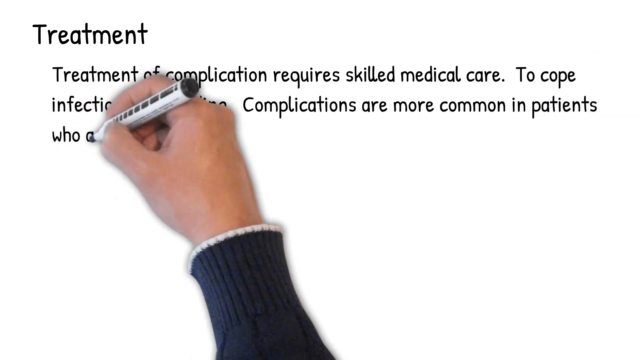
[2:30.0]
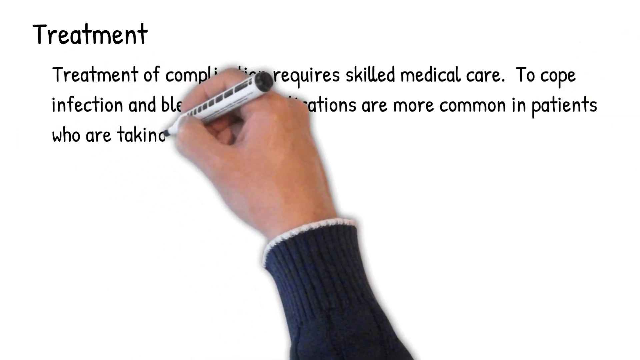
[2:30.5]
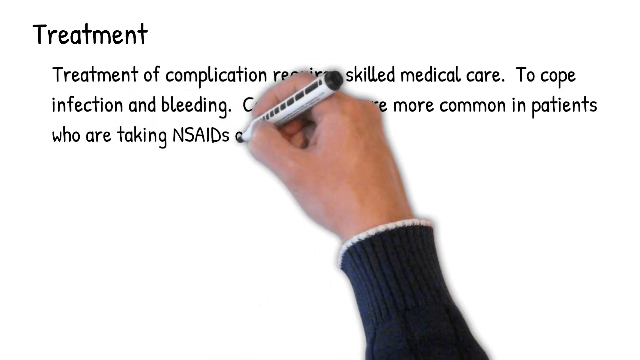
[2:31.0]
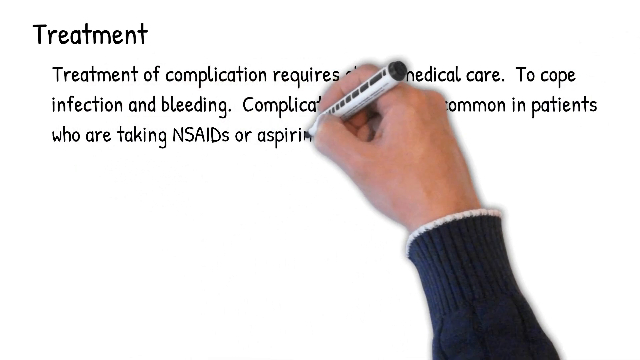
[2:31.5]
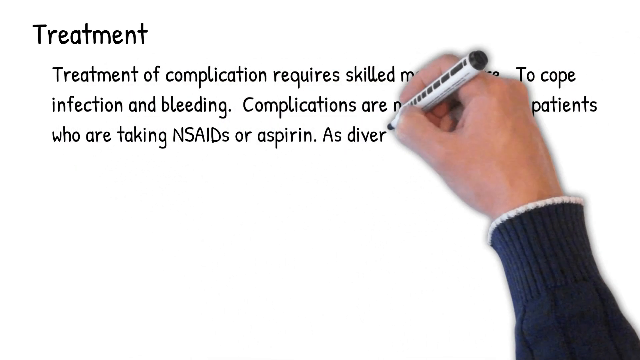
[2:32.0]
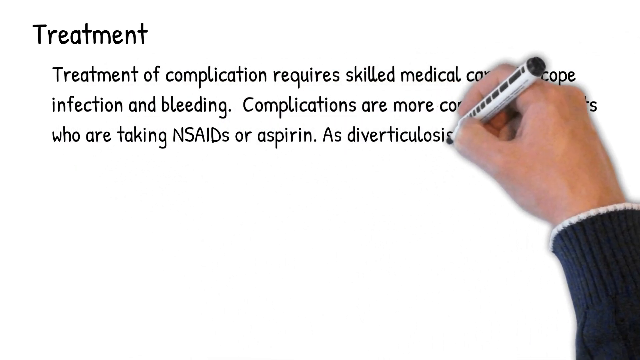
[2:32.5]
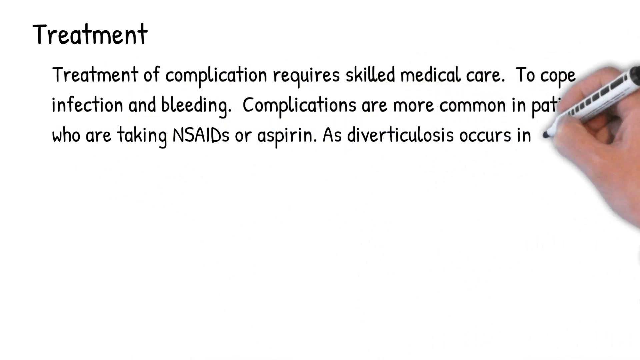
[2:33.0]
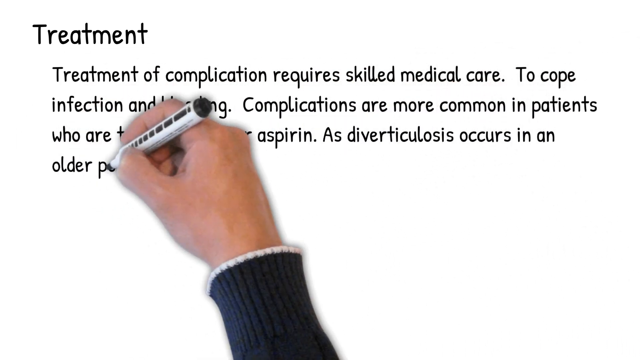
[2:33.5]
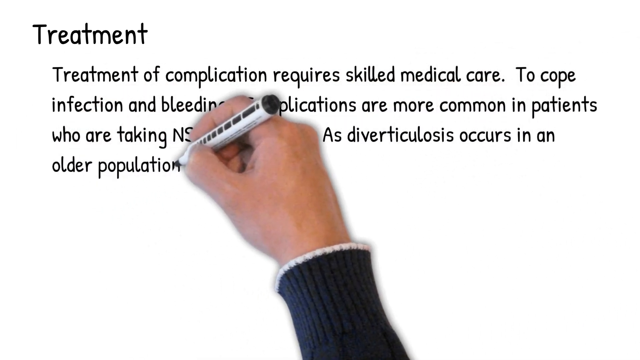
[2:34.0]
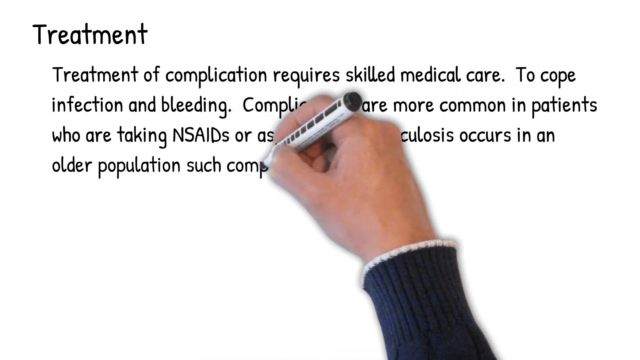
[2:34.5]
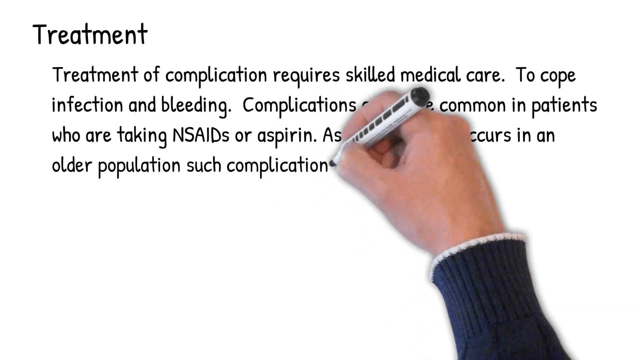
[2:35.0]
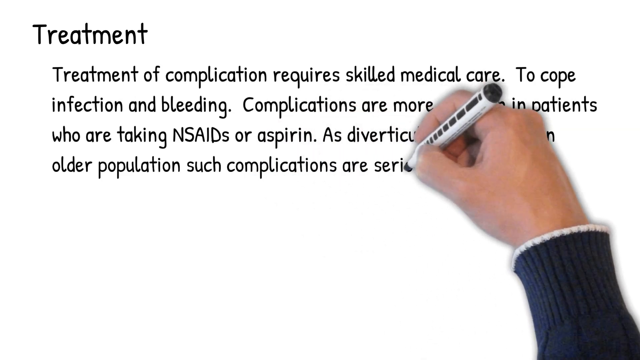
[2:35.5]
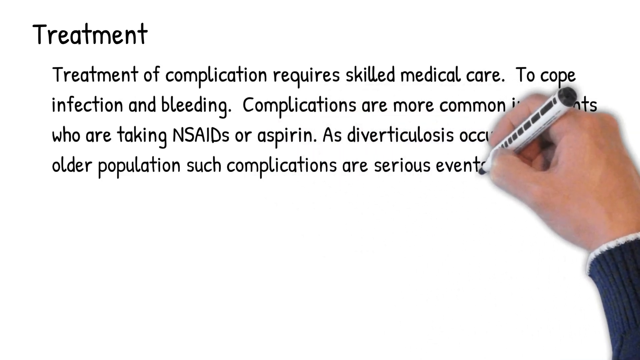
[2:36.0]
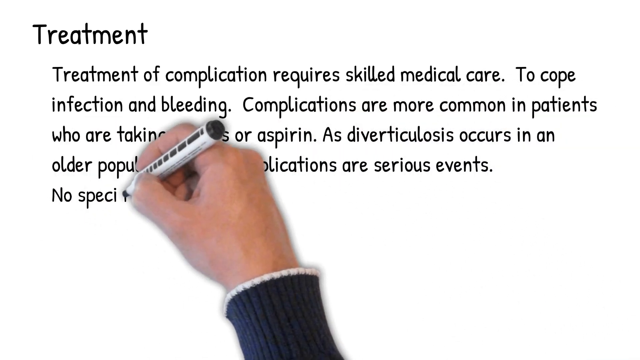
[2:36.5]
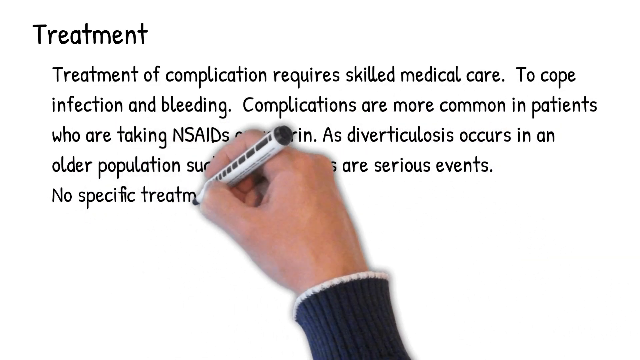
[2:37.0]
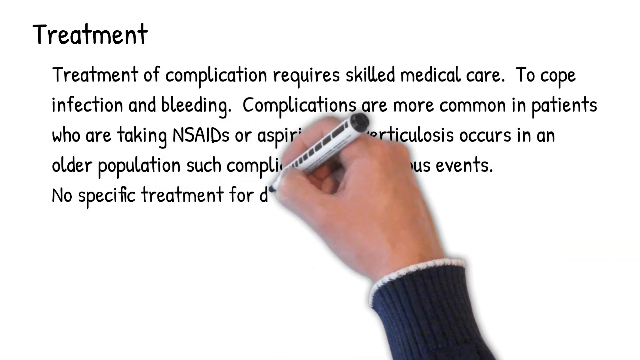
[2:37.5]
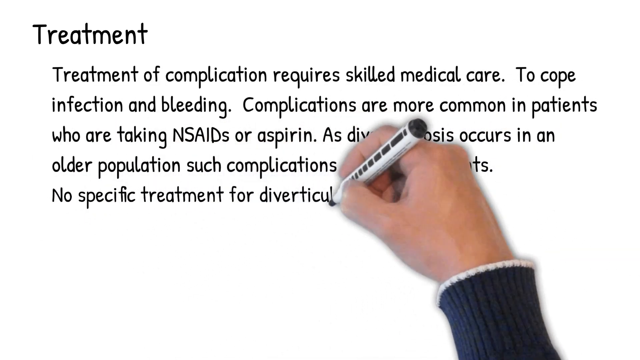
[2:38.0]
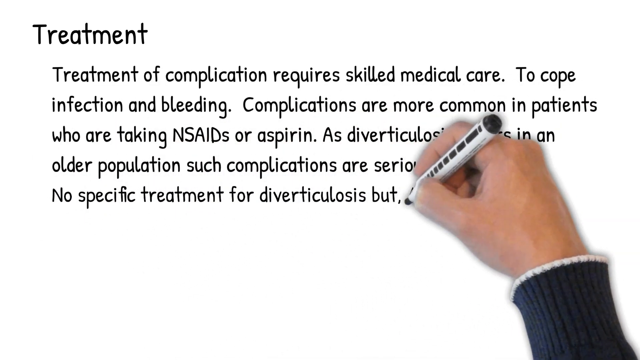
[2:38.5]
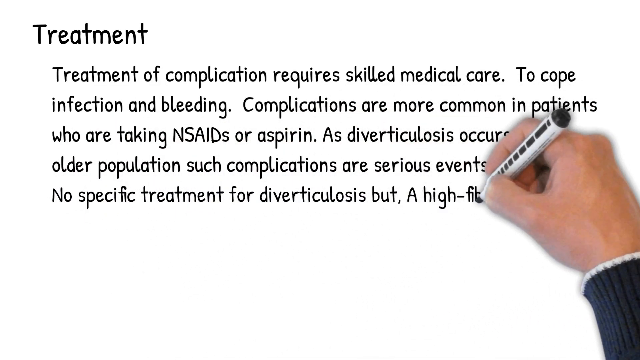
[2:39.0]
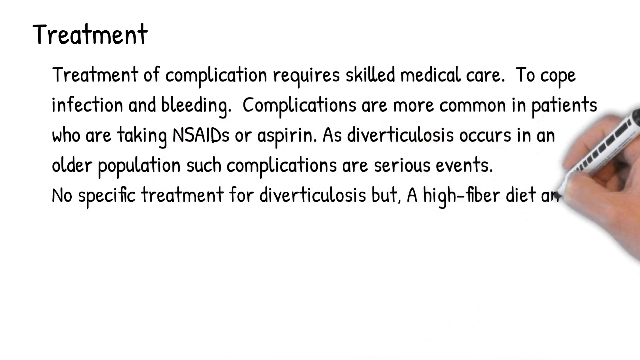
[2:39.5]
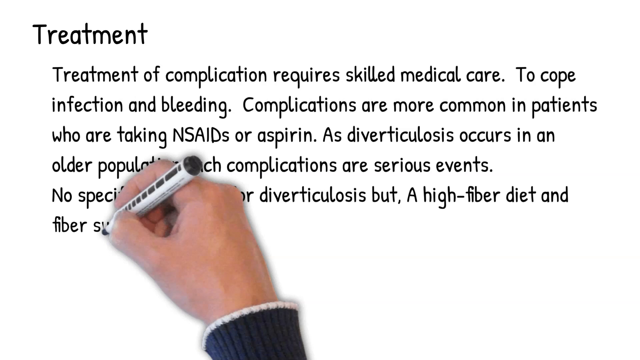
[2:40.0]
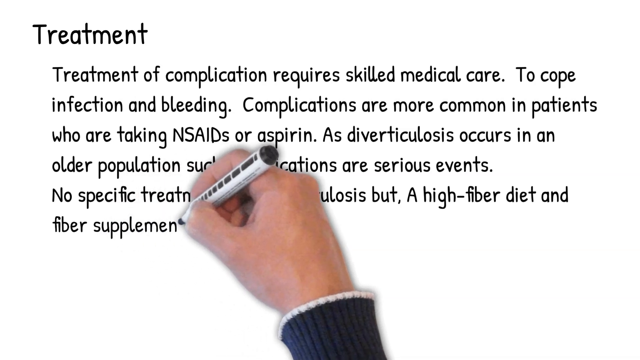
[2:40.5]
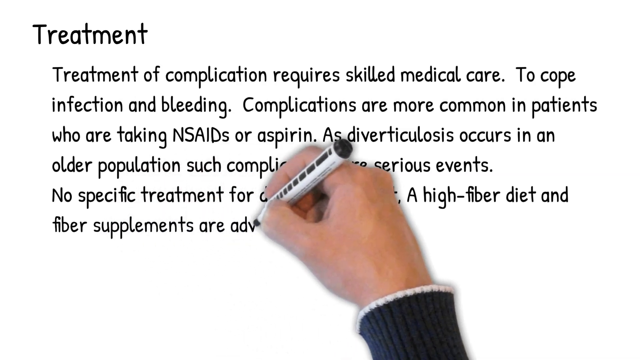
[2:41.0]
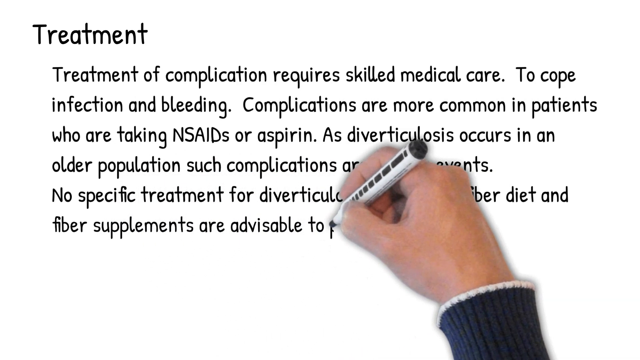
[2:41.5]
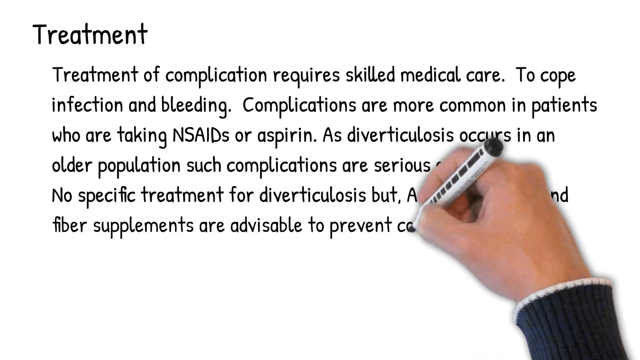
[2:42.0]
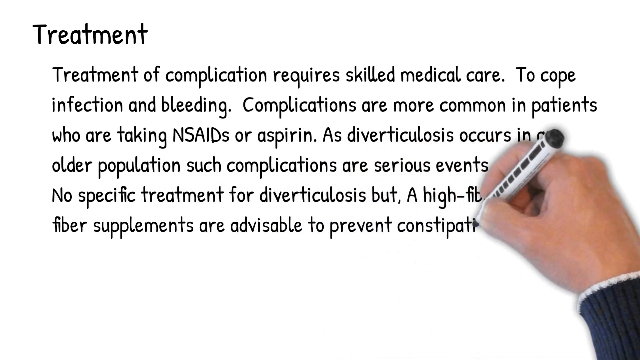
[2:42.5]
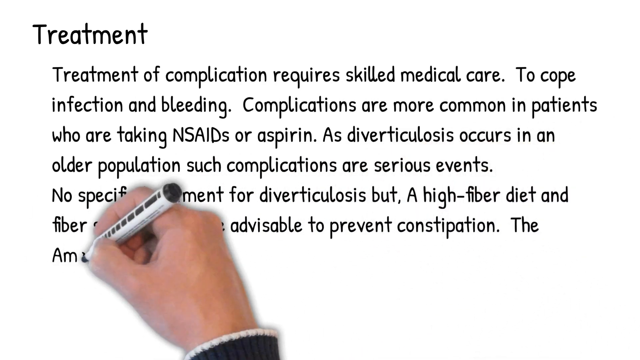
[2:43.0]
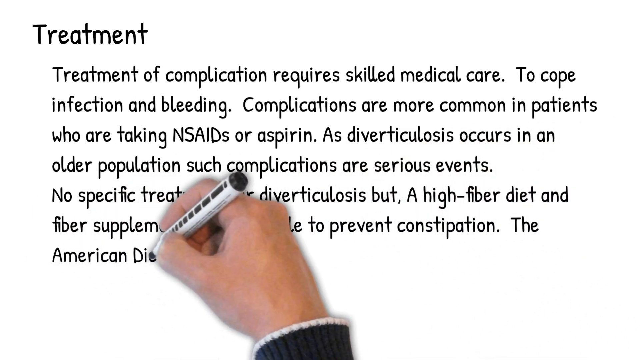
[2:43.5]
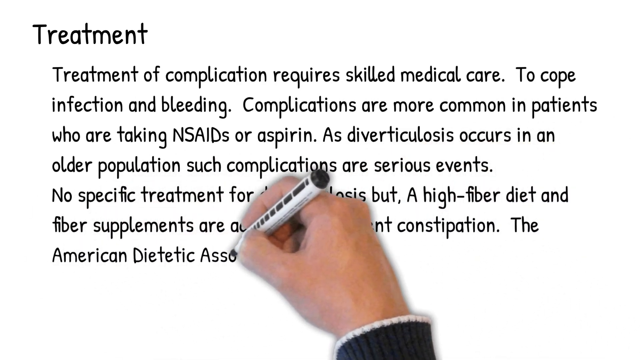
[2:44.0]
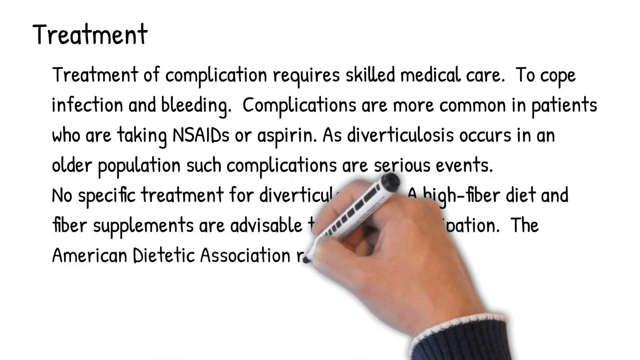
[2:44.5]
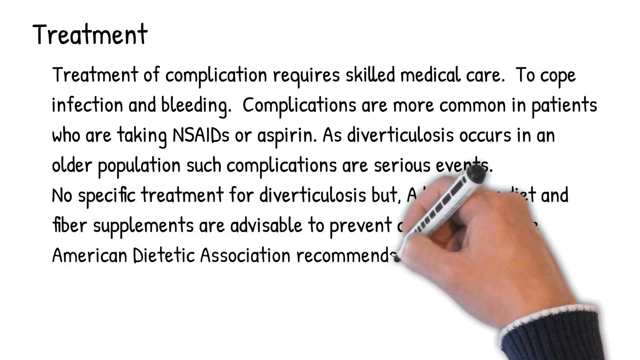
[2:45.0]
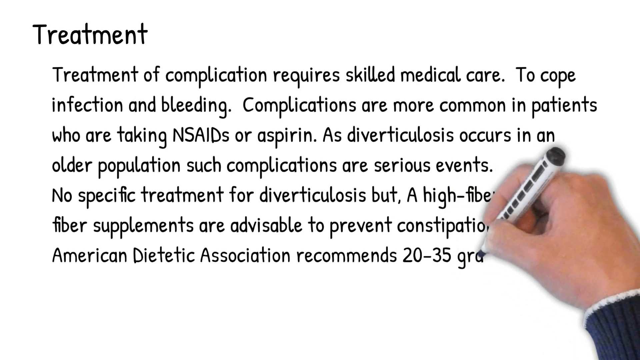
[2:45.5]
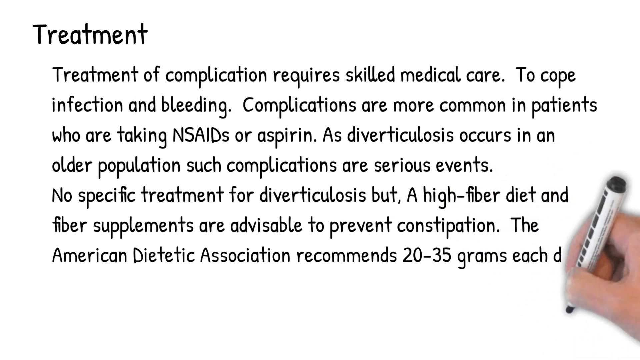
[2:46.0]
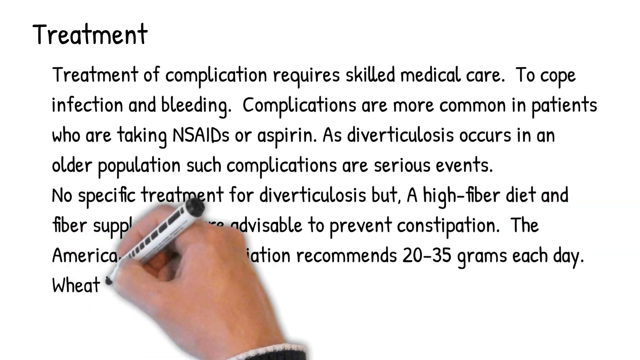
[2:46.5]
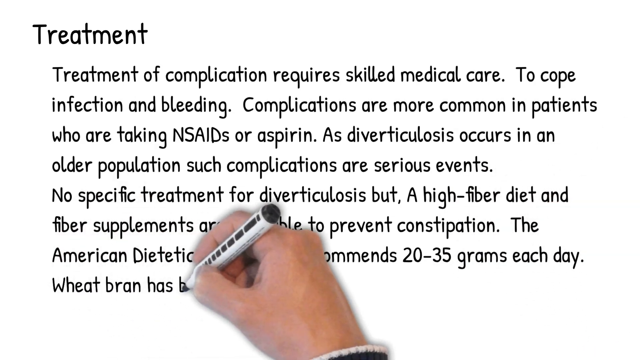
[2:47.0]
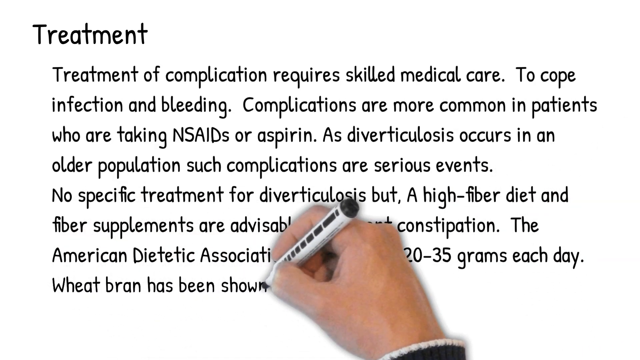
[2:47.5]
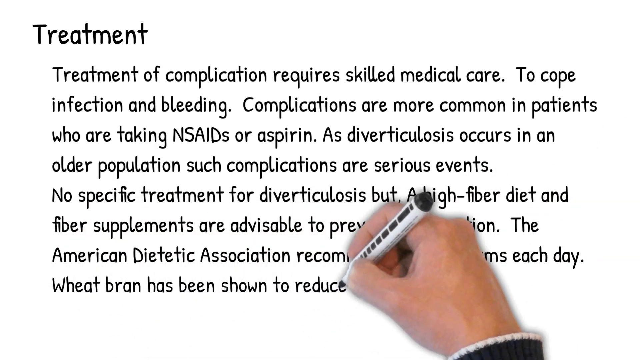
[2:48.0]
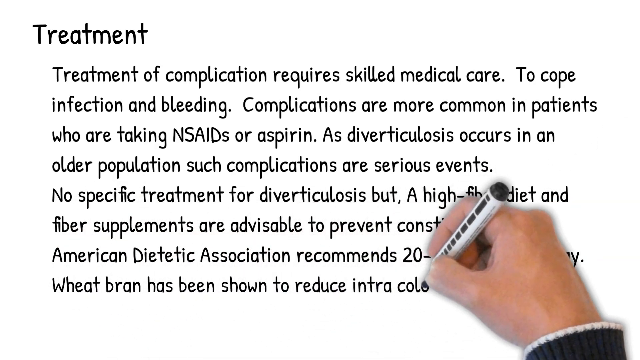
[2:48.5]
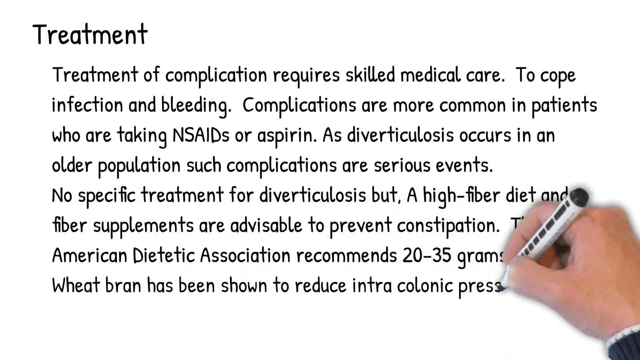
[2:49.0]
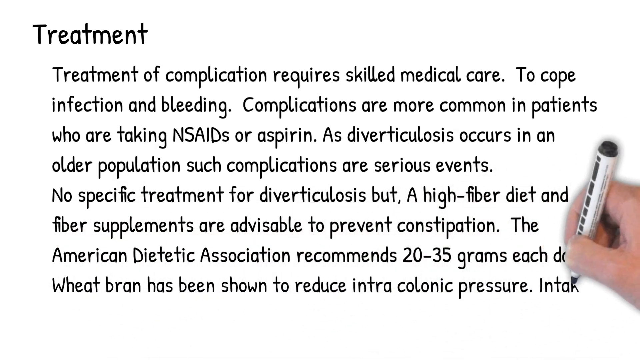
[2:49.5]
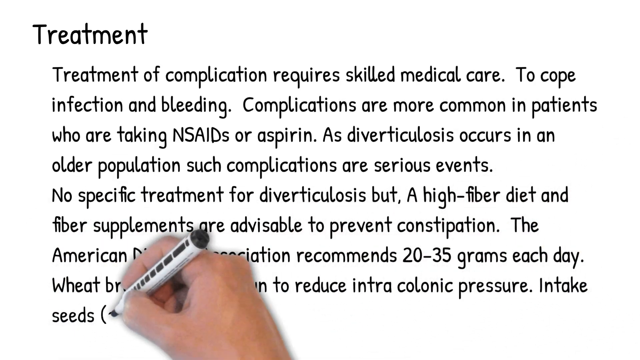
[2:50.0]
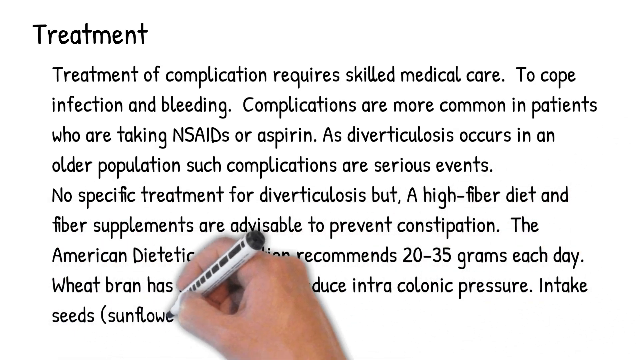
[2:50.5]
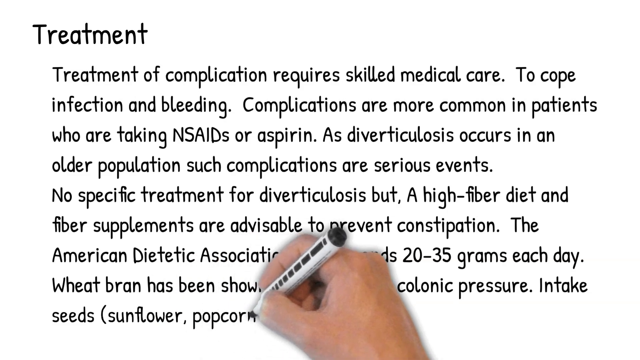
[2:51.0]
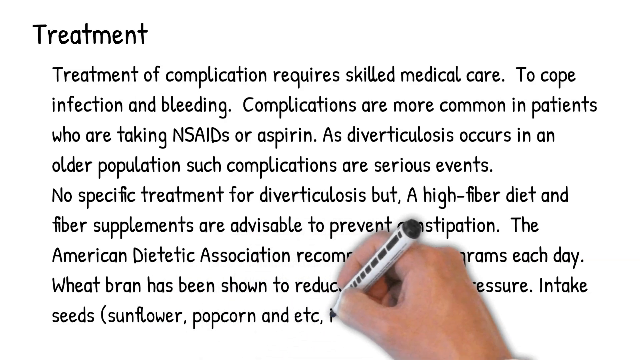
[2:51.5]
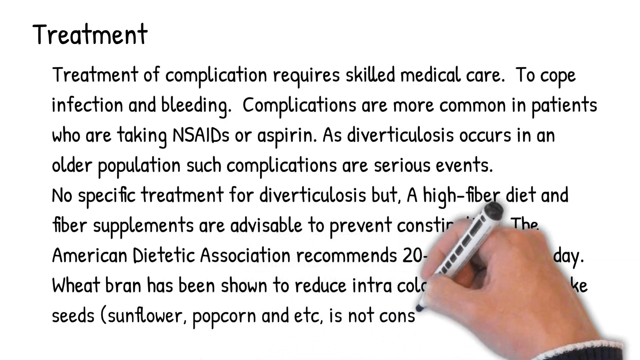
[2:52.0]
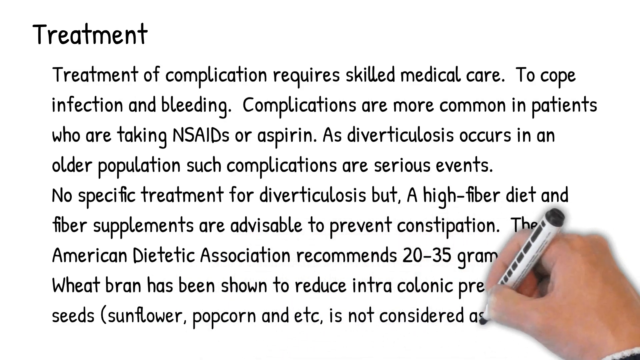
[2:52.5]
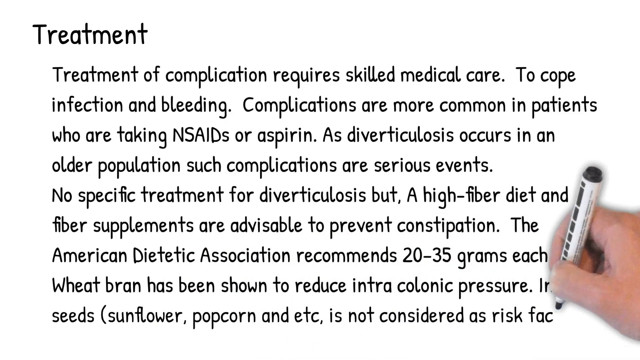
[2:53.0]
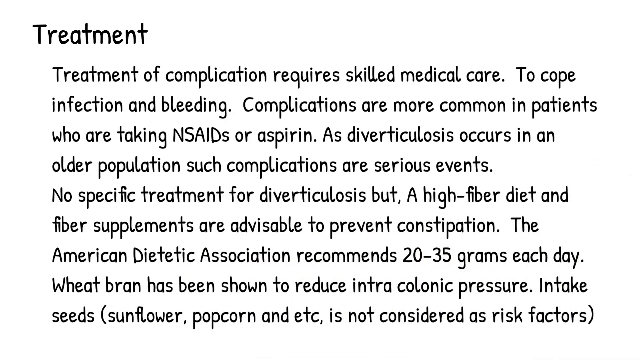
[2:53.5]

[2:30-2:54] A treatment slide says treatment of complication requires skilled medical care to cope with the infection and the bleeding. Text states that complications are more common in patients who are taking NSAIDS or aspirin, and that there is no specific treatment for diverticulitis, but recommends a diet high in fiber and fiber supplements to prevent constipation, with the American Dietetic Association recommending 20 to 35 grams each day. It also says wheat bran has been shown to reduce the pressure in the colon, and "intake of seeds, sunflower, popcorn seeds, and et cetera is not considered a risk factor."